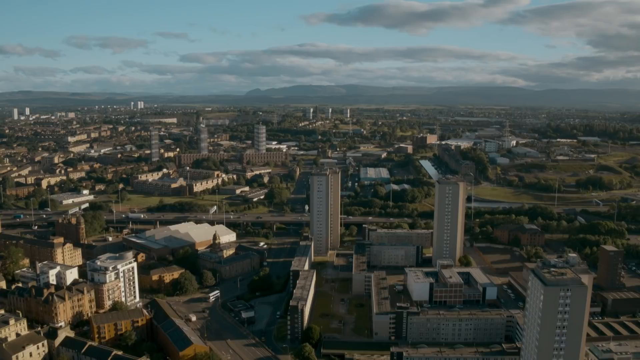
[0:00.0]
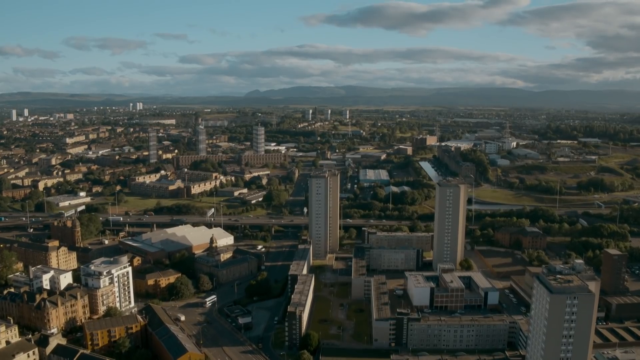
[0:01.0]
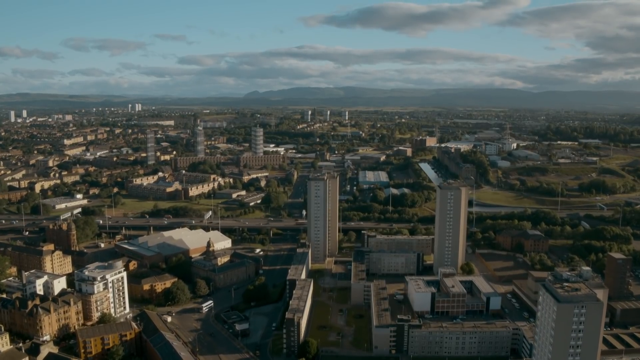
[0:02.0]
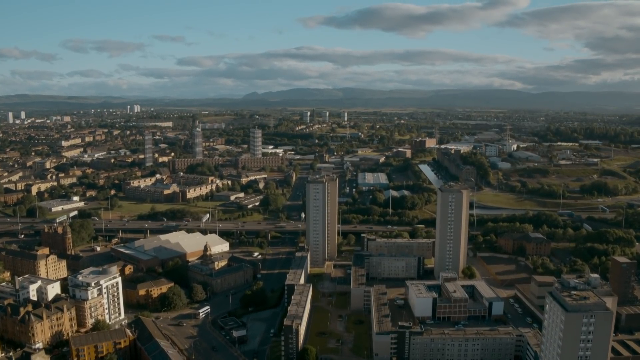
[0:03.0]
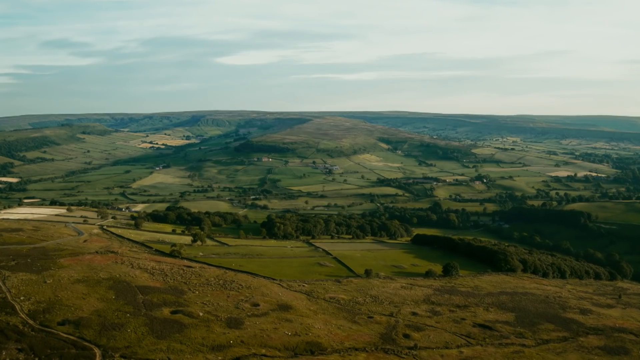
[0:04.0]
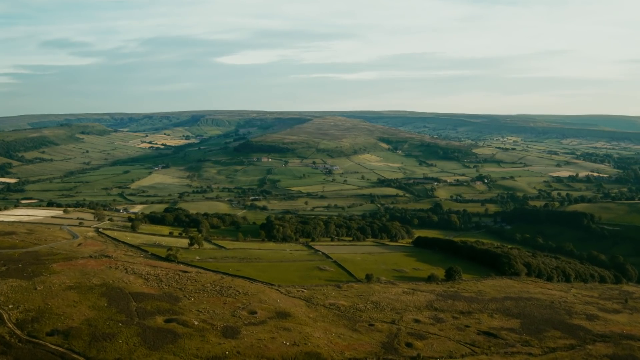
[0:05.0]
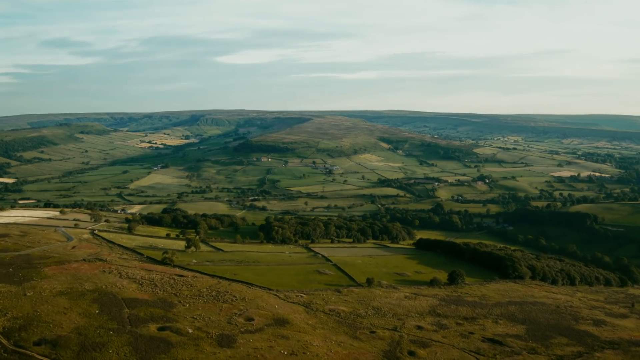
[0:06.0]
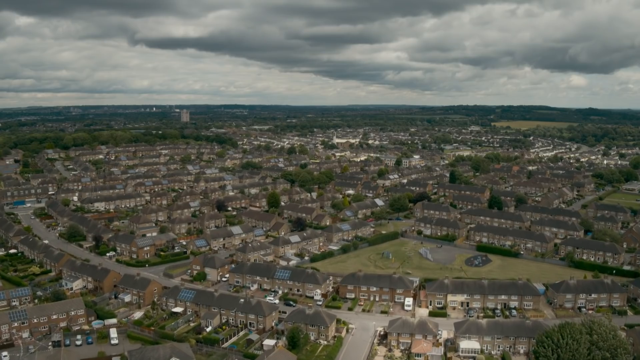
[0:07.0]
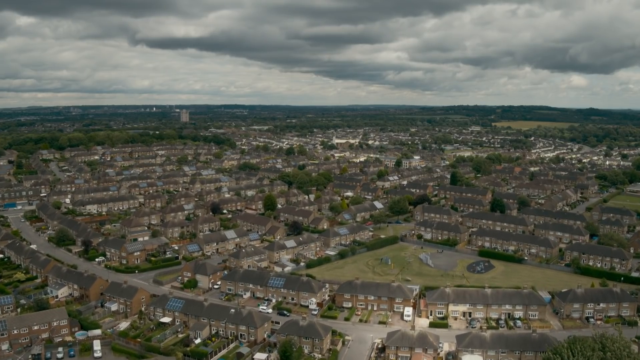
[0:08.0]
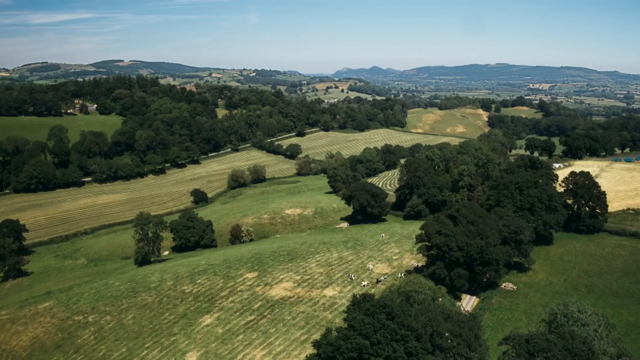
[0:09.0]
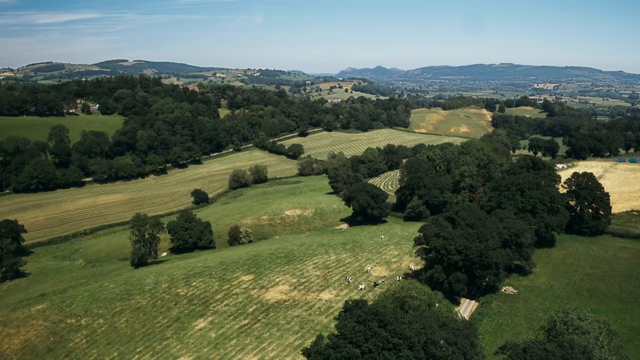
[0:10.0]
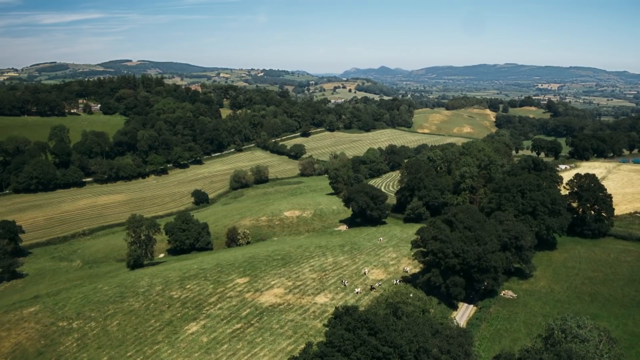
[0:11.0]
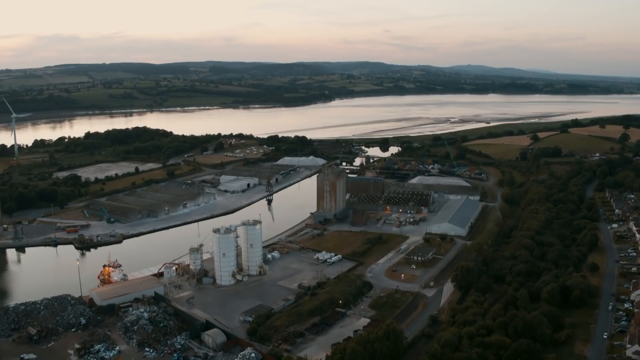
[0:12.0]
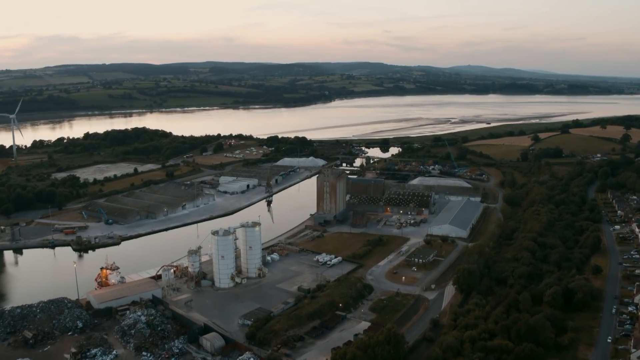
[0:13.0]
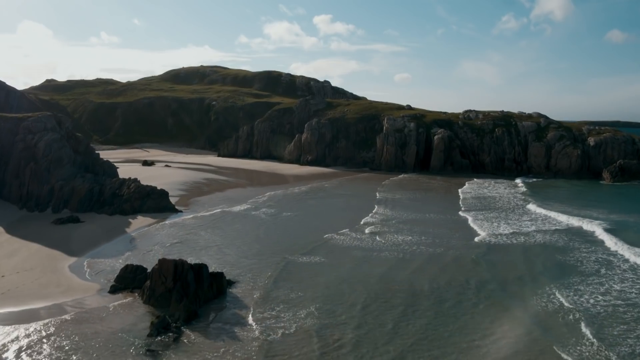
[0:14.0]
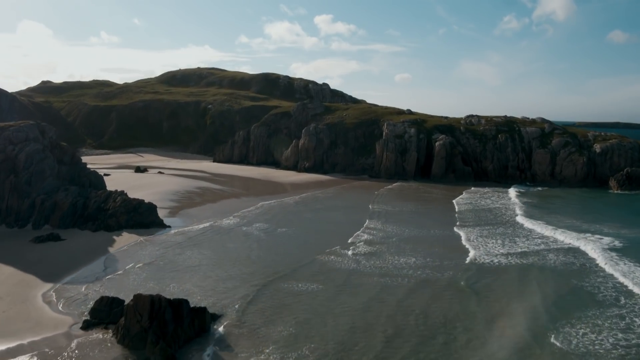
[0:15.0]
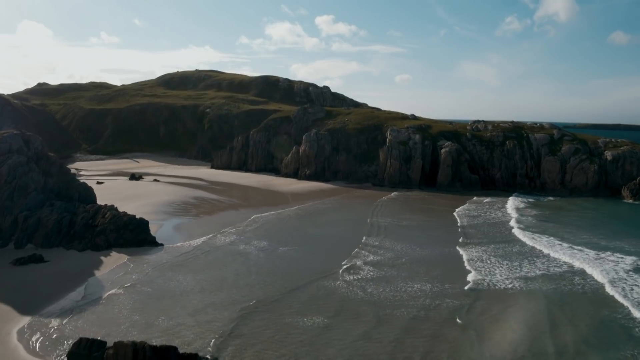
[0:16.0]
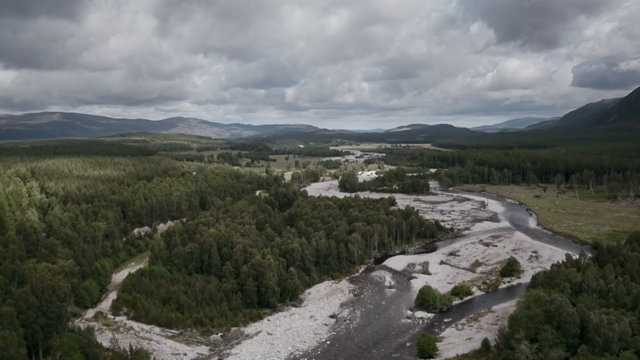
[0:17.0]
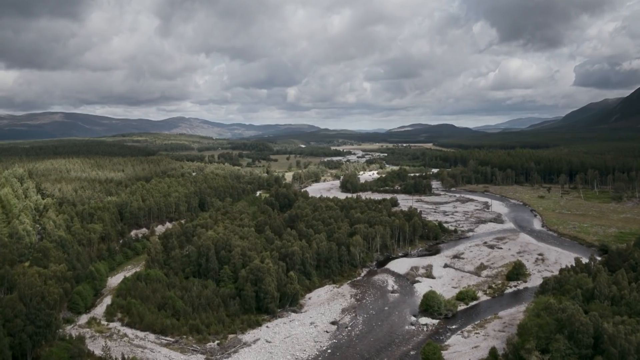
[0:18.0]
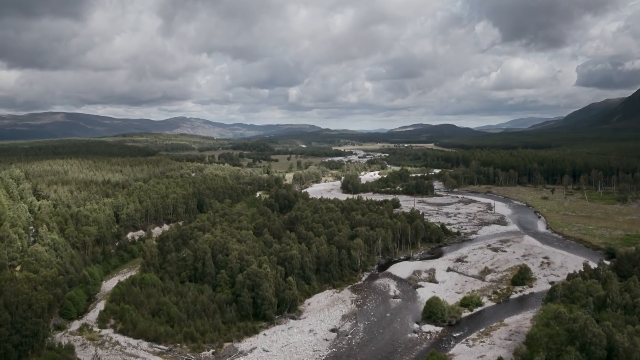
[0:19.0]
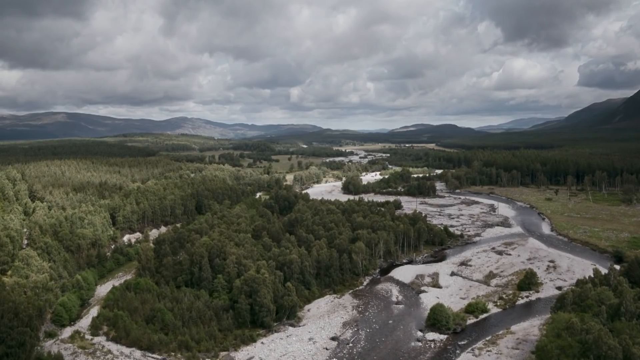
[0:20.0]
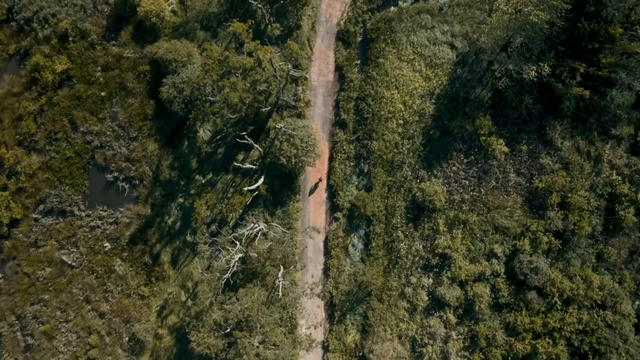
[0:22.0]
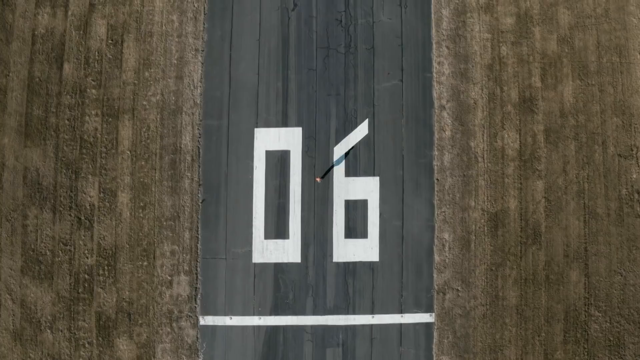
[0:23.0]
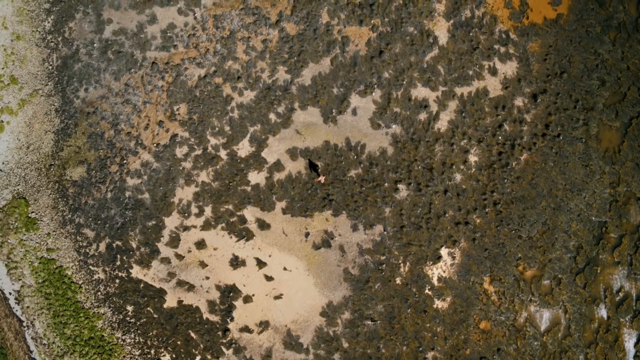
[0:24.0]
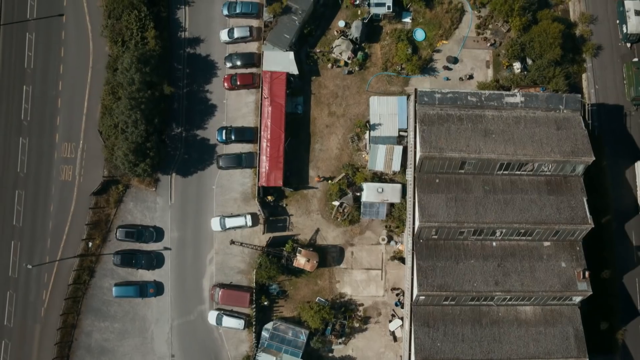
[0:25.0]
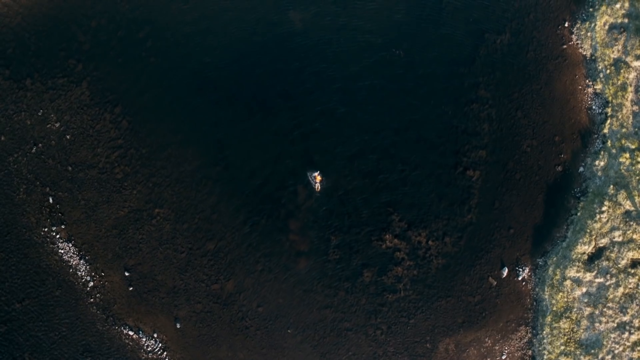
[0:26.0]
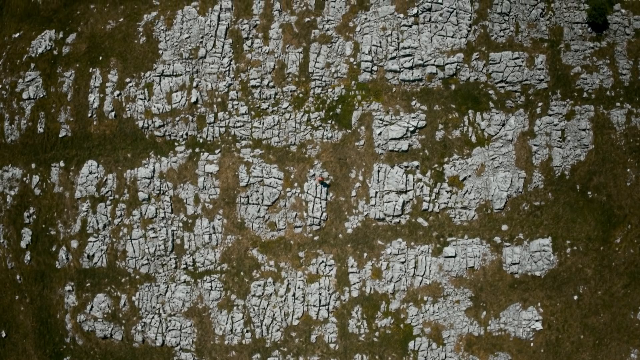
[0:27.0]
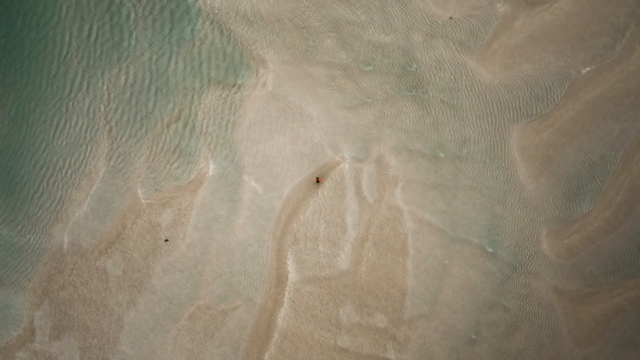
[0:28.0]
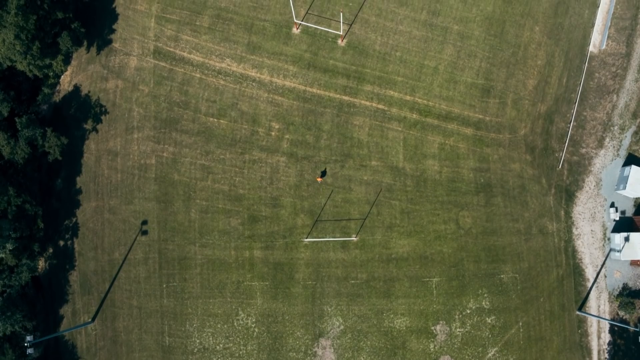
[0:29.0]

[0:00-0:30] The video is shot from above, likely by a drone, looking down on different landscapes. First there are rolling green meadows on a bright day, with lots of little green clusters of trees everywhere. It switches to another aerial scene over a large area of housing, possibly apartments: very large buildings set up in rows, probably at least a hundred of them in the shot. Another aerial shot of meadows with green trees appears only briefly before it switches to an industrial area with a manufacturing-type factory and two white cylinder towers. Down below, a river runs next to the towers, and off in the distance there are trees and a windmill. Then comes an aerial shot of a beach that is very rocky, with very smooth sand and rolling waves coming in.